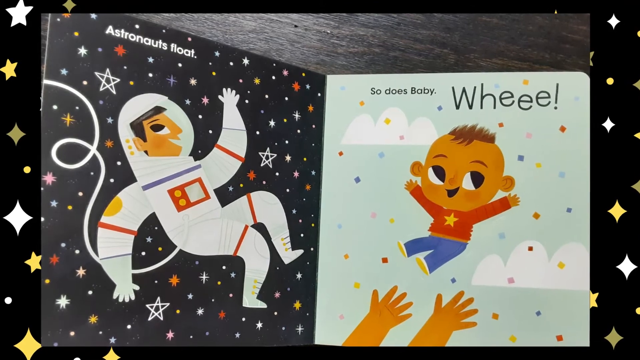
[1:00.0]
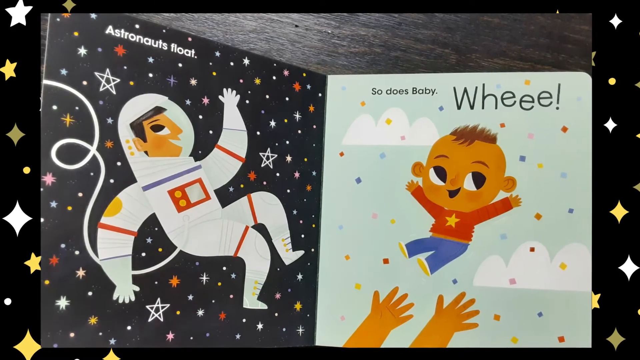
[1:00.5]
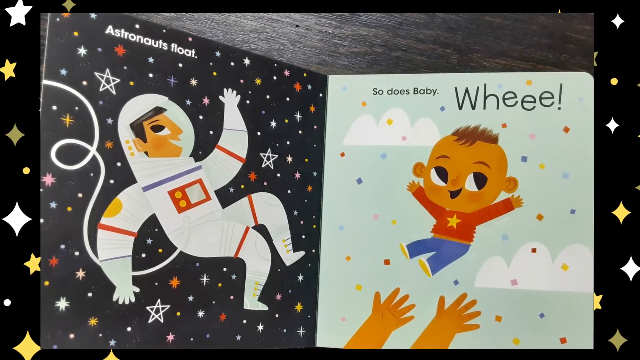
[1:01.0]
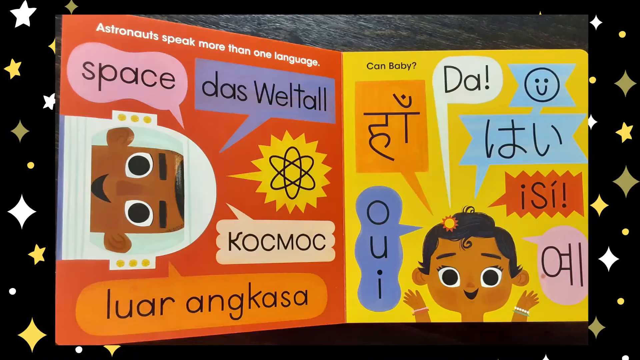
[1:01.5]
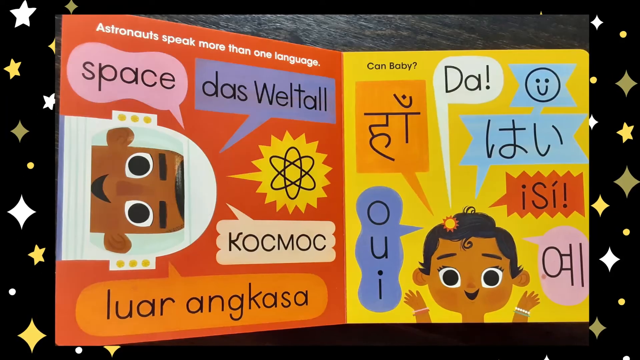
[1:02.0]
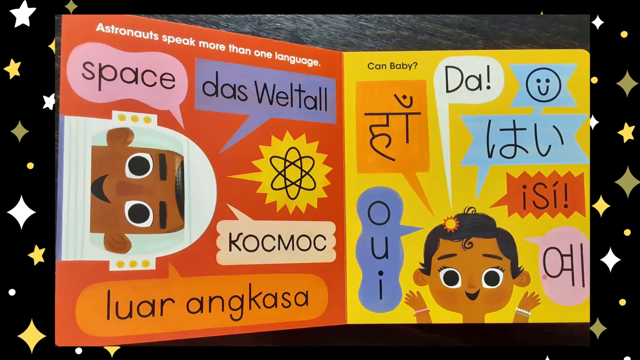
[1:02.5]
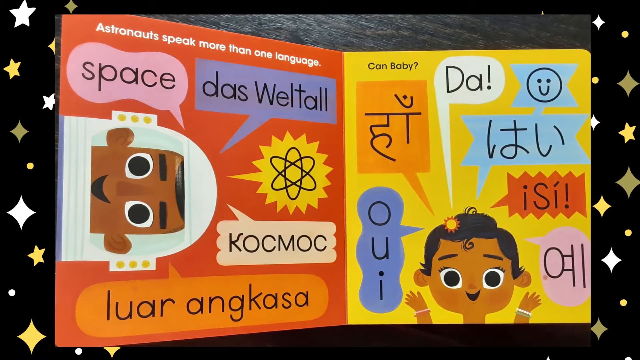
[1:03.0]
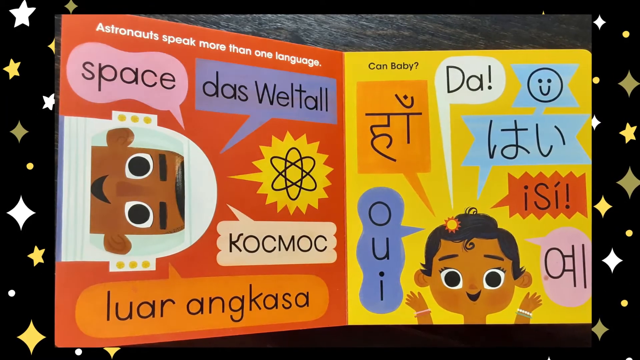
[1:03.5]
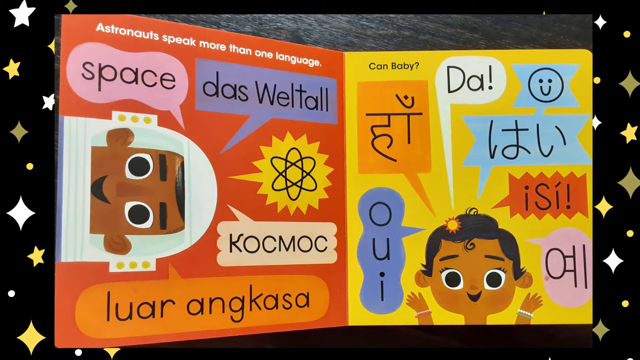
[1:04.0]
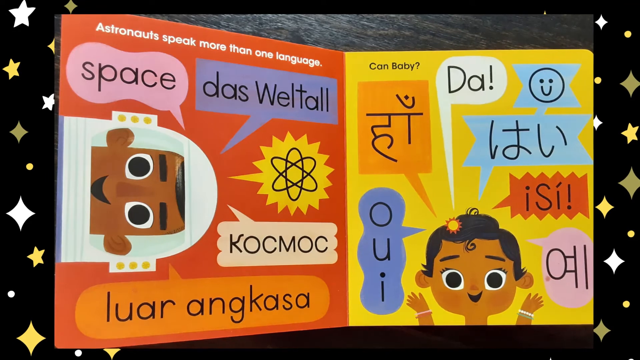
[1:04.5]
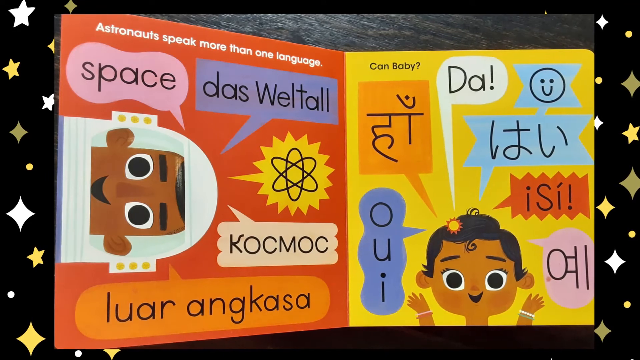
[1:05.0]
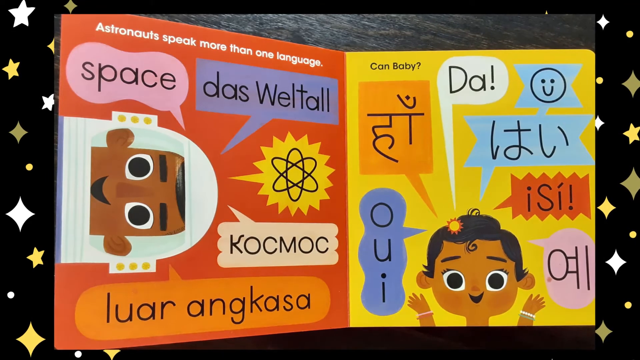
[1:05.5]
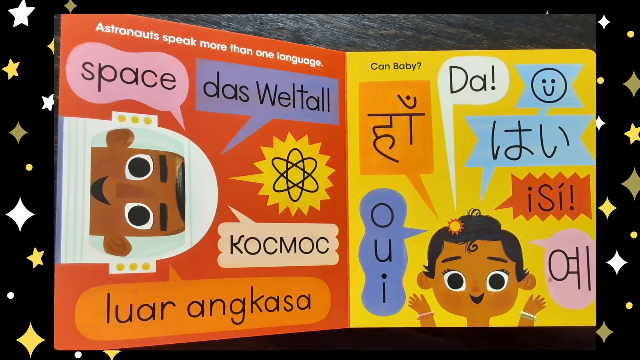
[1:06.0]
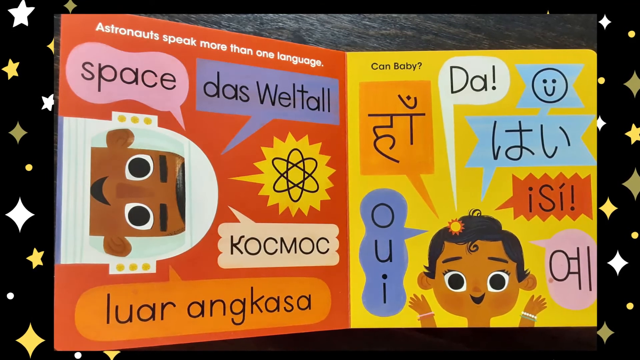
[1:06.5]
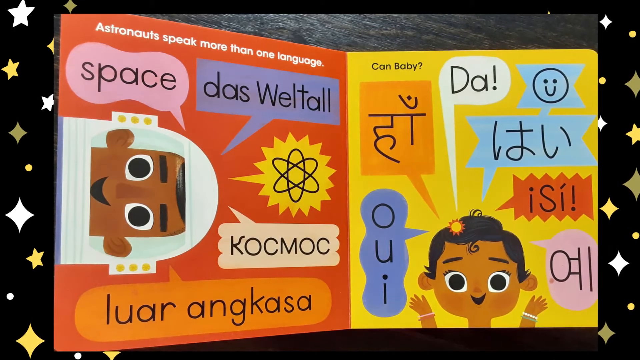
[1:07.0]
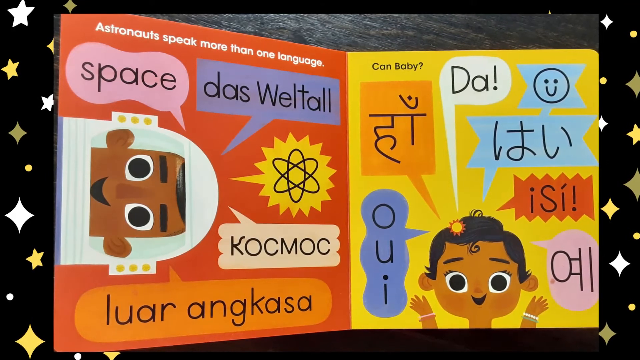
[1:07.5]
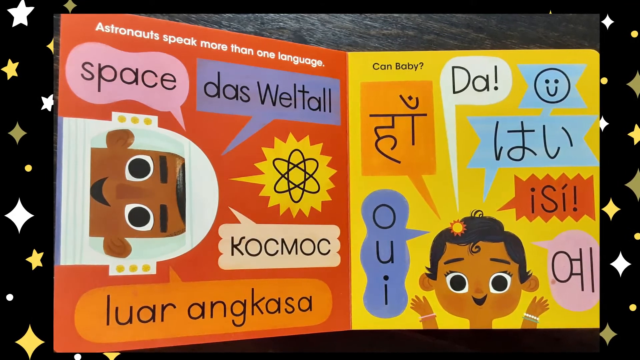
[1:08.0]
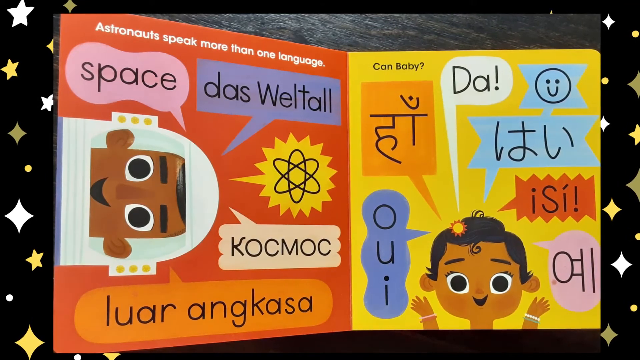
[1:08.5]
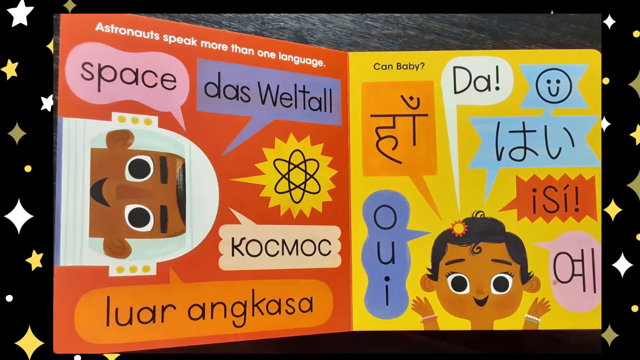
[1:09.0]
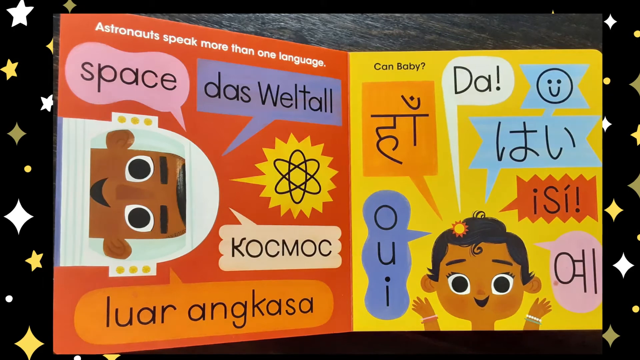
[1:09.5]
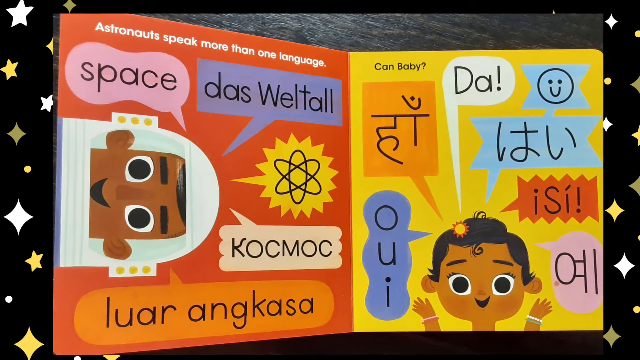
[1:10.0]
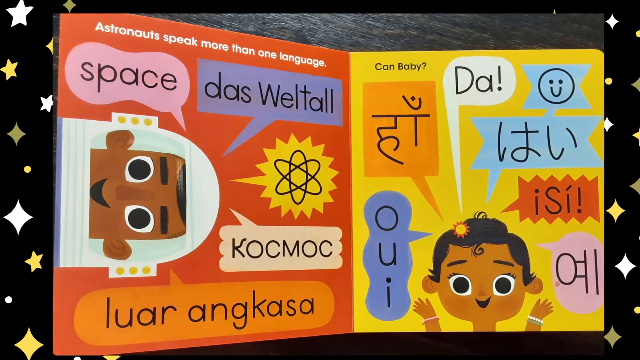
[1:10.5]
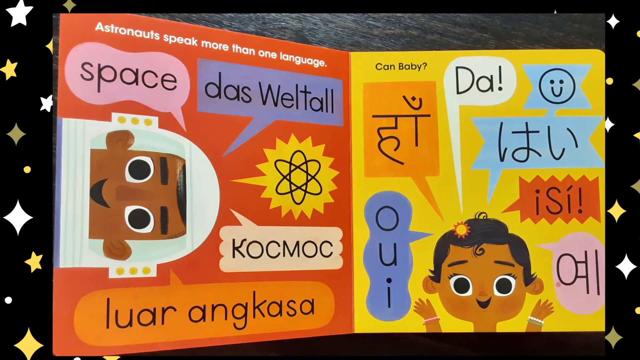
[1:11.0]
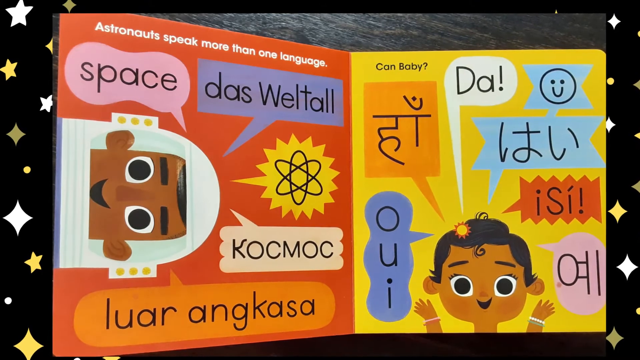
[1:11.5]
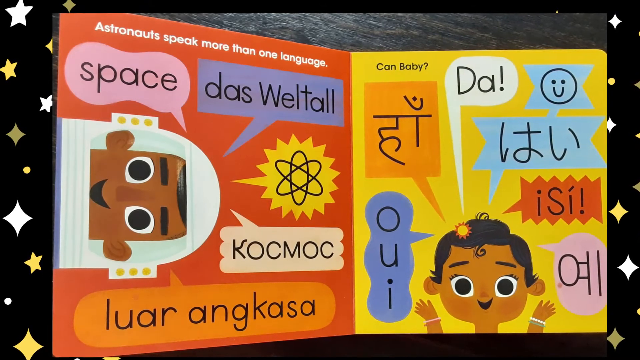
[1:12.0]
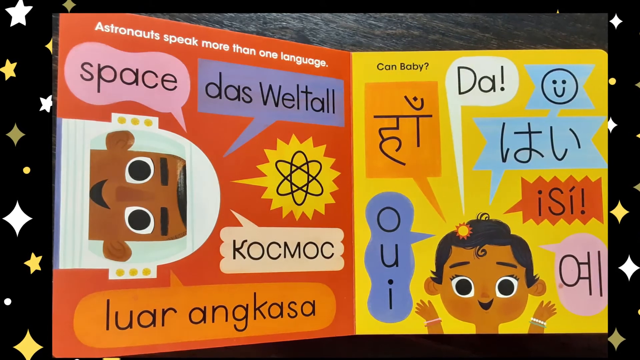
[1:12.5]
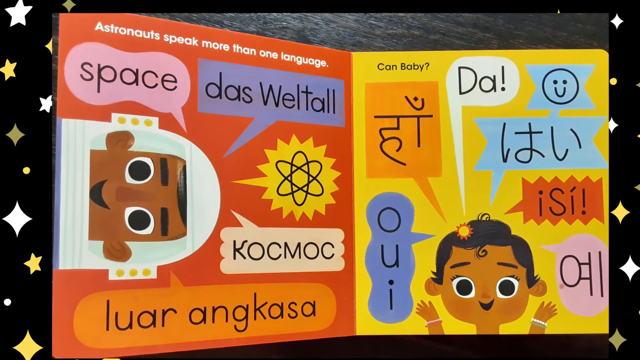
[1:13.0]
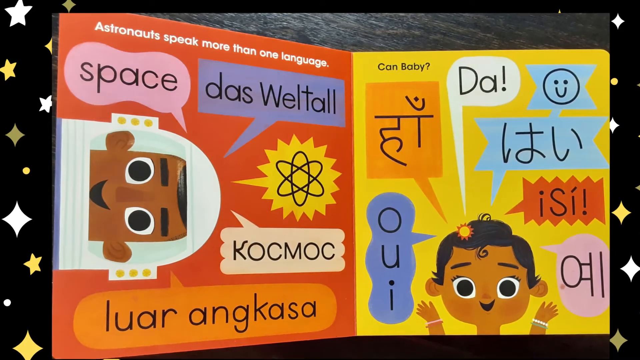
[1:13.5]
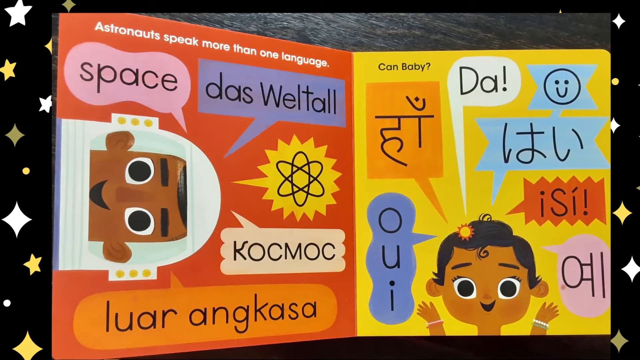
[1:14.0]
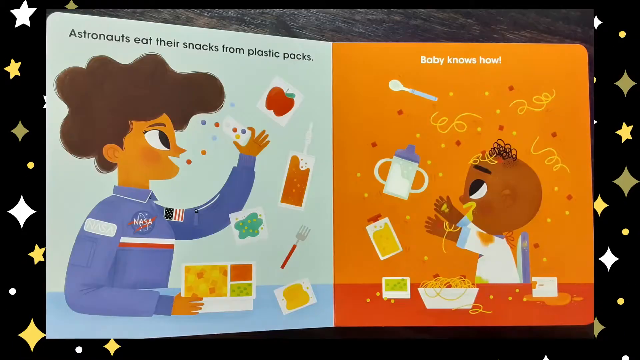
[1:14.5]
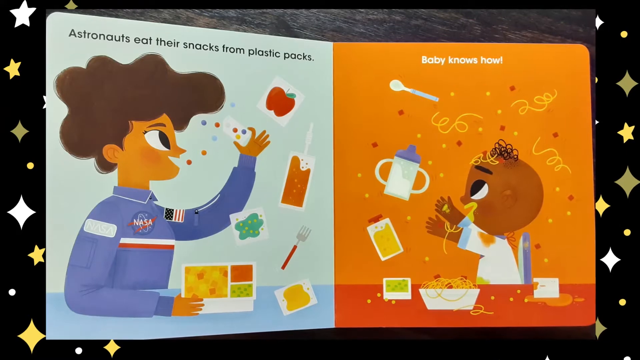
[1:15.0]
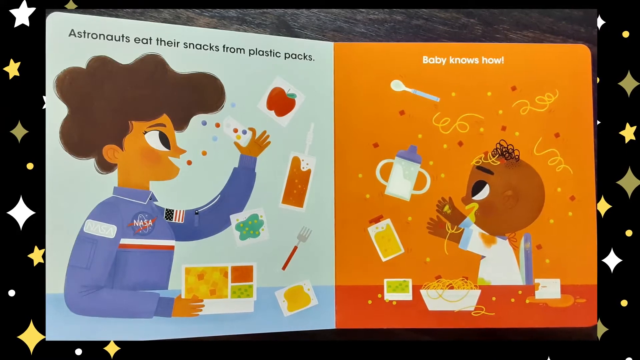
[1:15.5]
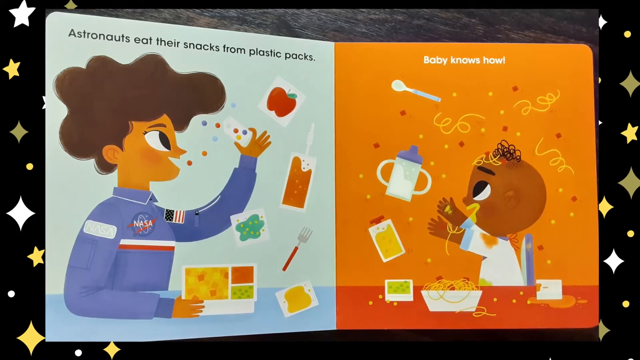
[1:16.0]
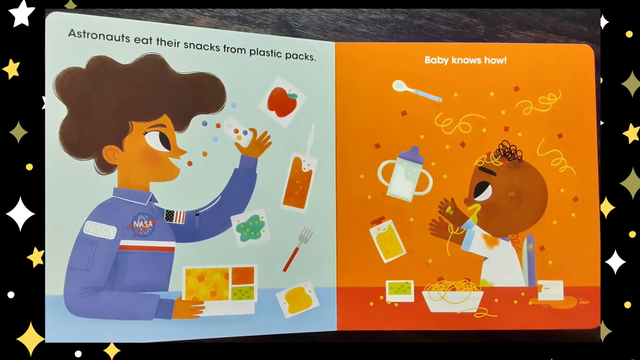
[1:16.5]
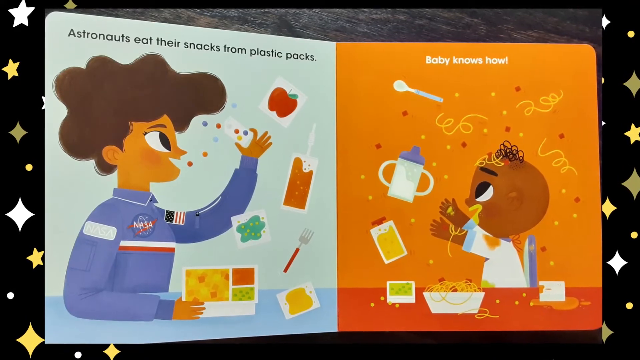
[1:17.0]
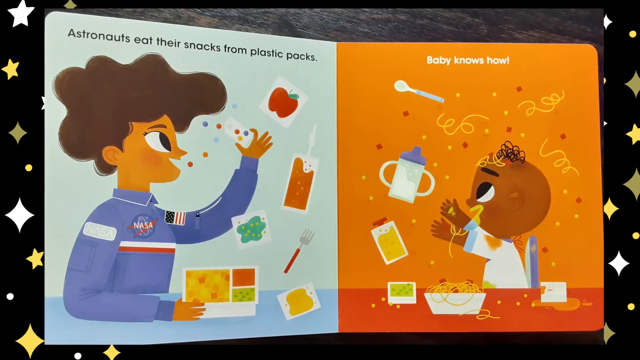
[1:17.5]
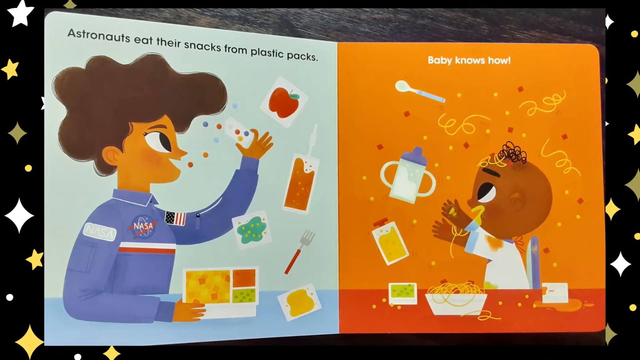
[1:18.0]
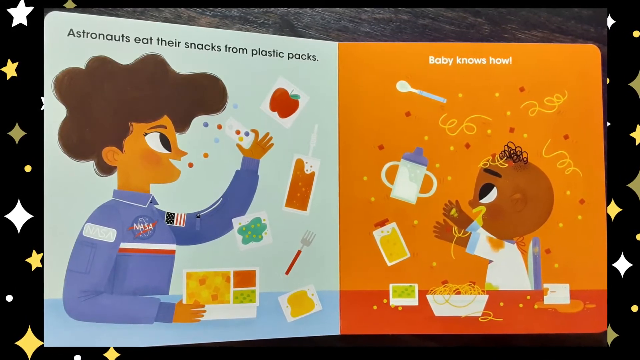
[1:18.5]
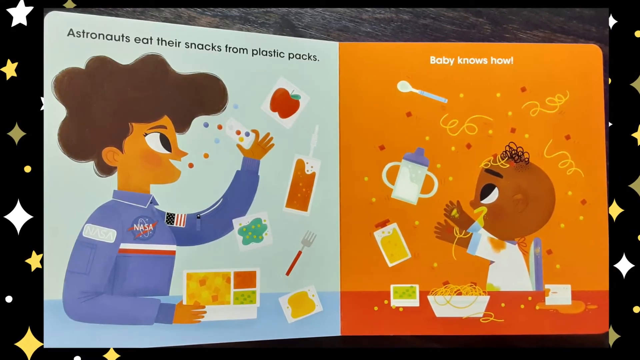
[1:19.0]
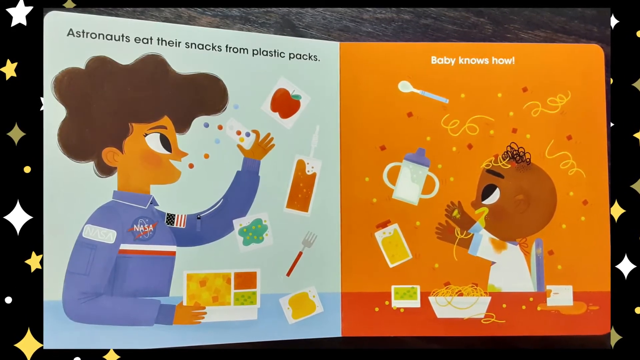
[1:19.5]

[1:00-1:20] The book opens to a male astronaut floating, his right leg up and his hands raised, with a white caption above reading "astronauts float". On the right-hand side, against a greenish-bluish background, a baby is lifted up by hands; the baby lifts his hands and is happy. There are white clouds, and the baby wears red and blue. Text above reads "so does baby", along with an exclamation written in another font. The book flips to an astronaut with five shapes containing written words, under the heading "astronauts speak more than one language"; the words include "space", "lua" and "angkasa", and there is a shape inside the yellow one. On the right-hand side there is a baby with a question mark and different shapes in light blue, with some of the fonts apparently Chinese. The book then opens to a female astronaut holding something with two fingers, with an apple drawing above; in her hand she holds a paper with three boxes. She has a brown afro and wears a blue NASA shirt with a U.S. flag. Text above reads "astronauts eat their snacks from plastic packs". On the right-hand side, a baby eats noodles, with his bottle of juice up there, noodles on his head and a spoon; the caption reads "baby knows how". The background behind the baby is orange, with a table spread.